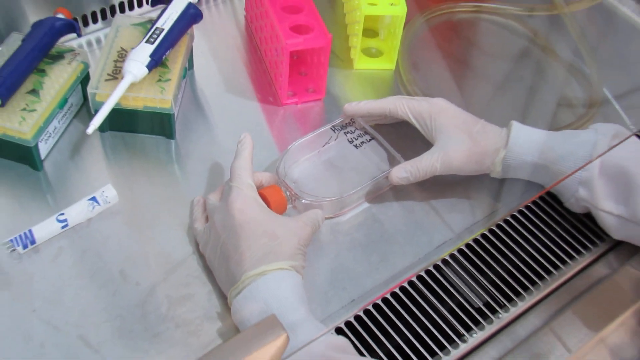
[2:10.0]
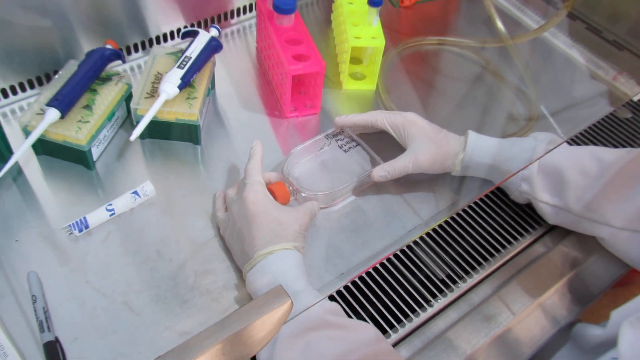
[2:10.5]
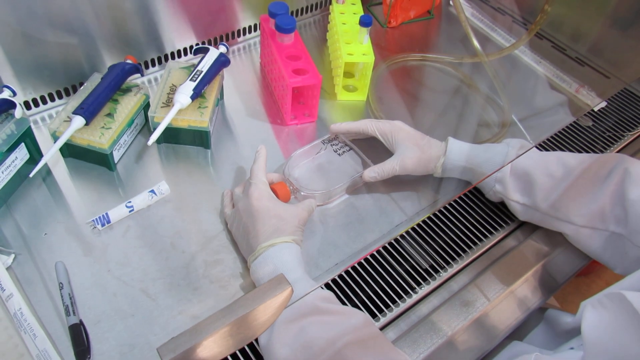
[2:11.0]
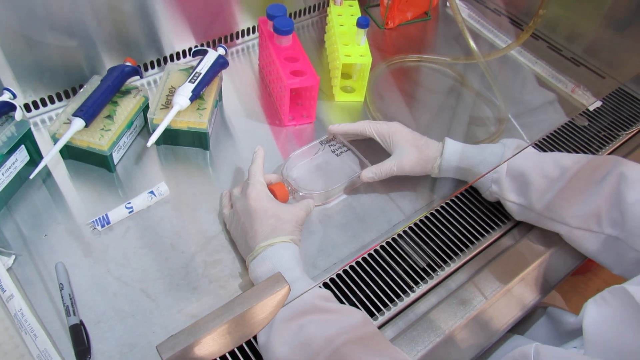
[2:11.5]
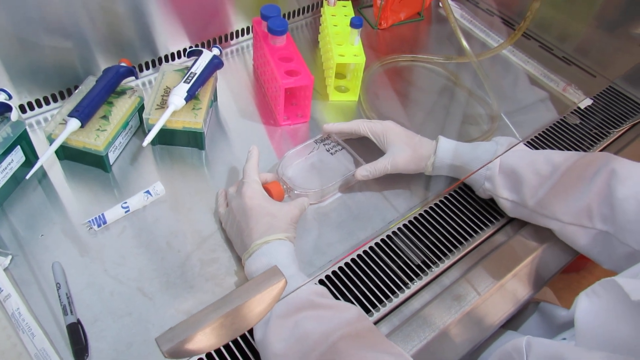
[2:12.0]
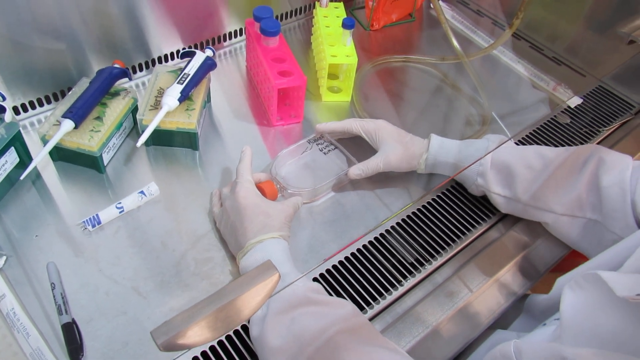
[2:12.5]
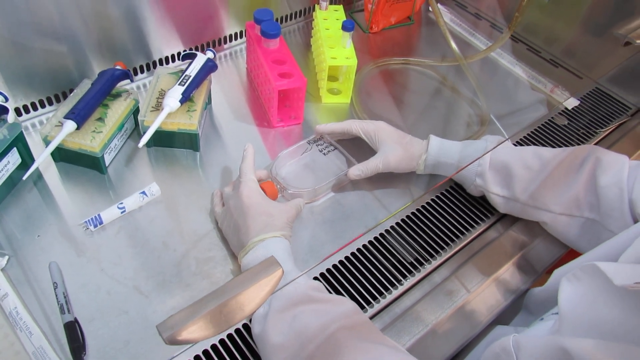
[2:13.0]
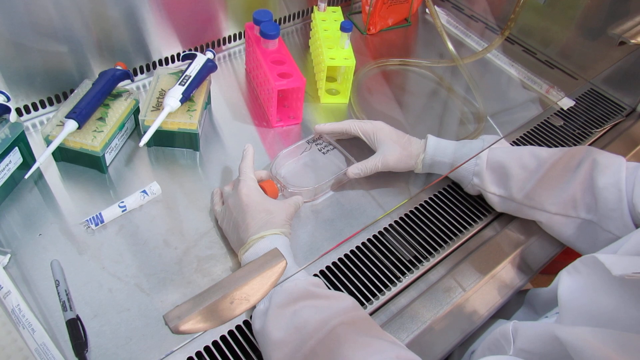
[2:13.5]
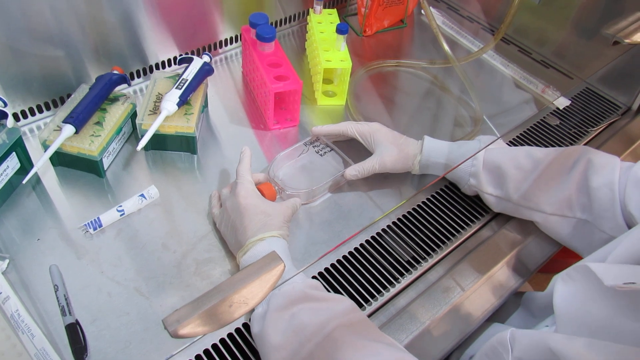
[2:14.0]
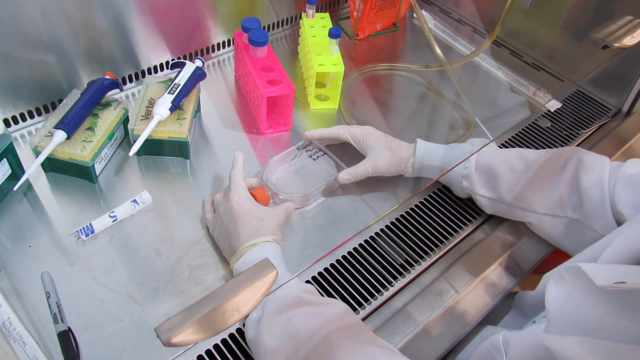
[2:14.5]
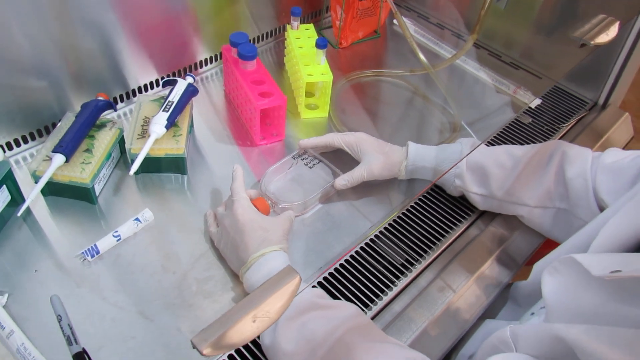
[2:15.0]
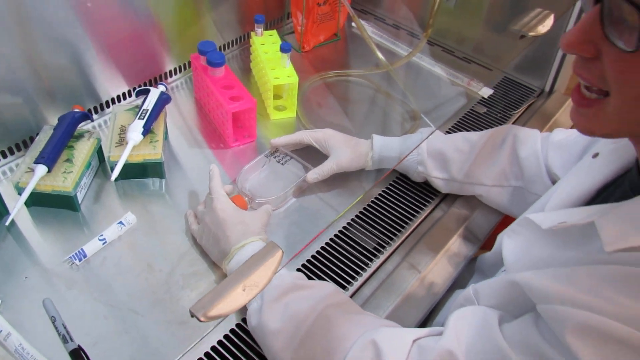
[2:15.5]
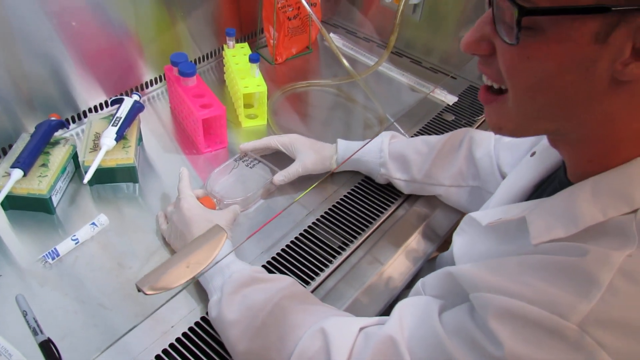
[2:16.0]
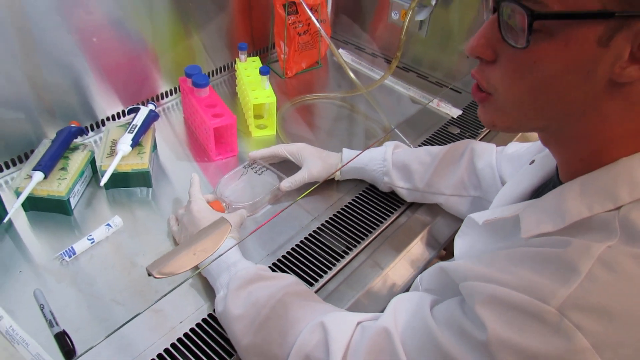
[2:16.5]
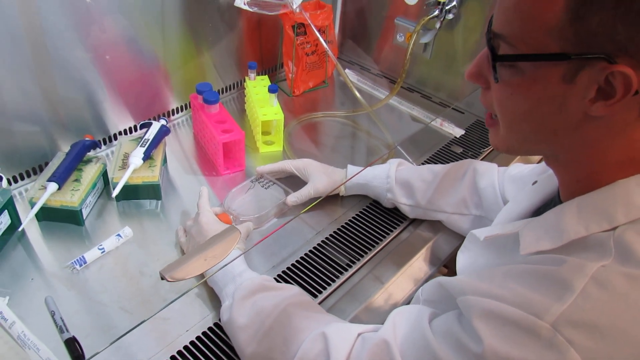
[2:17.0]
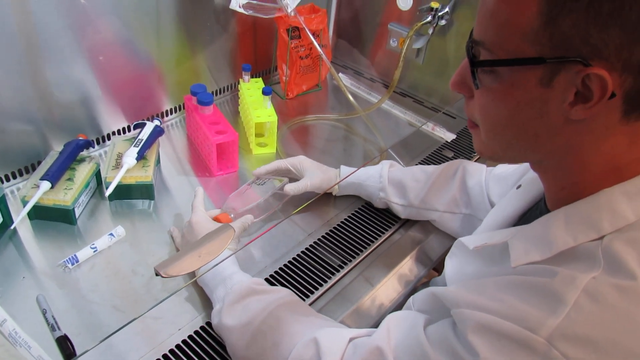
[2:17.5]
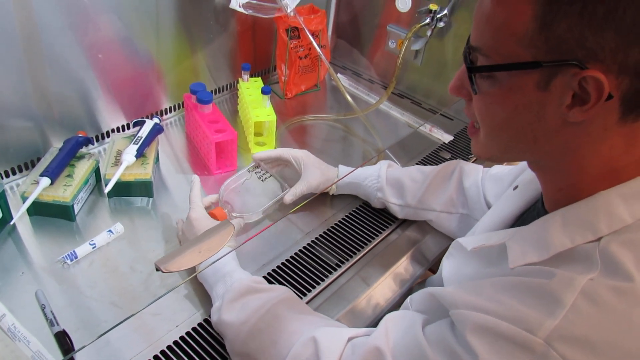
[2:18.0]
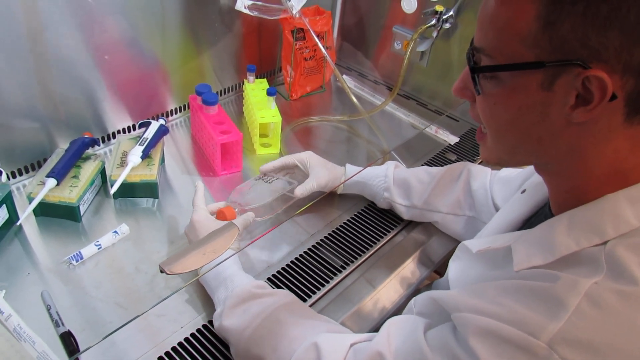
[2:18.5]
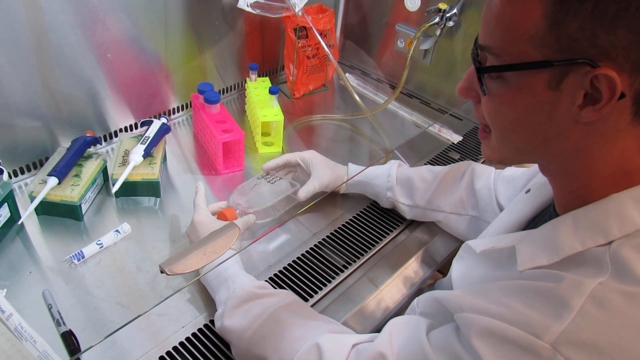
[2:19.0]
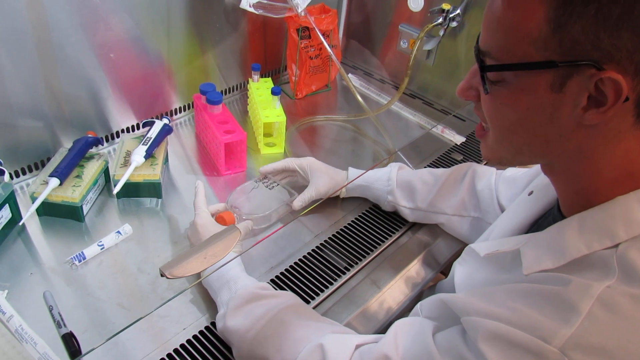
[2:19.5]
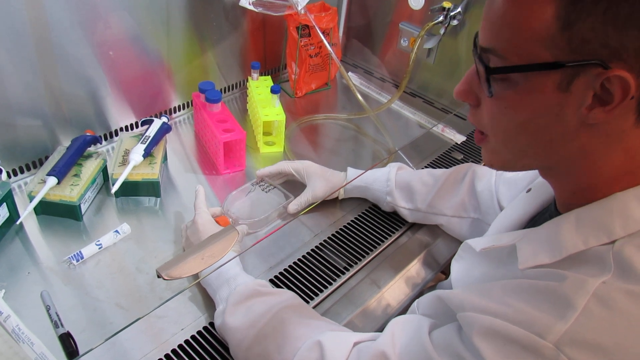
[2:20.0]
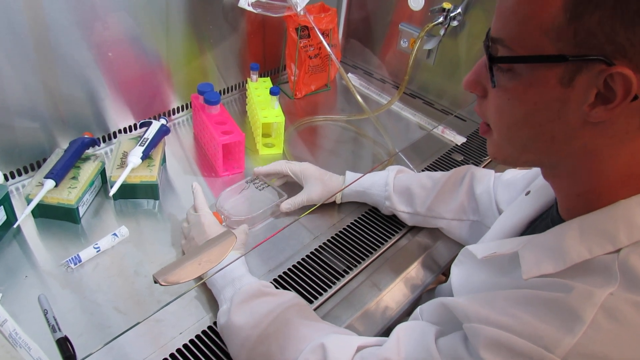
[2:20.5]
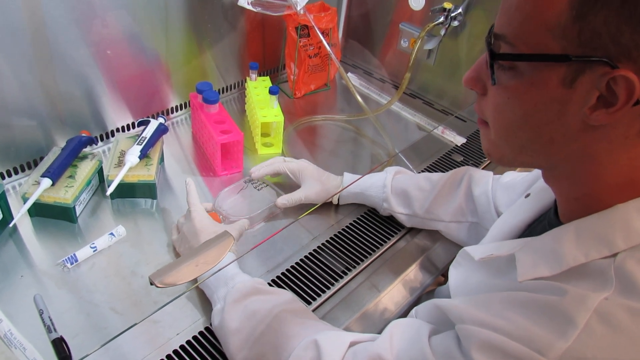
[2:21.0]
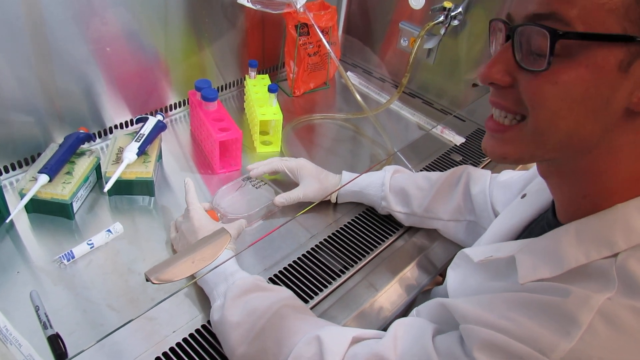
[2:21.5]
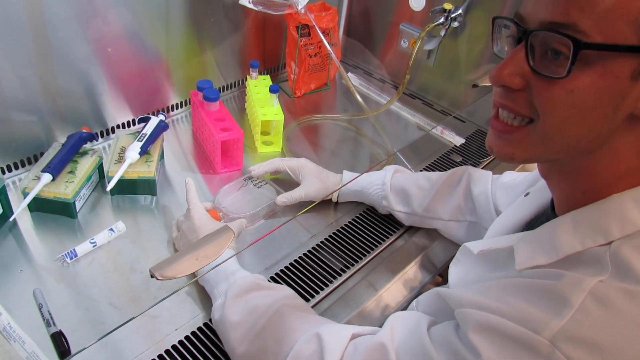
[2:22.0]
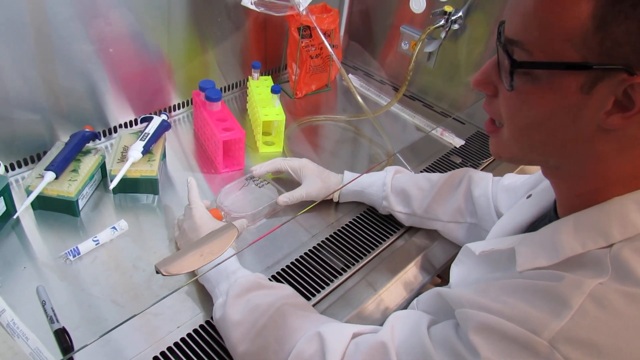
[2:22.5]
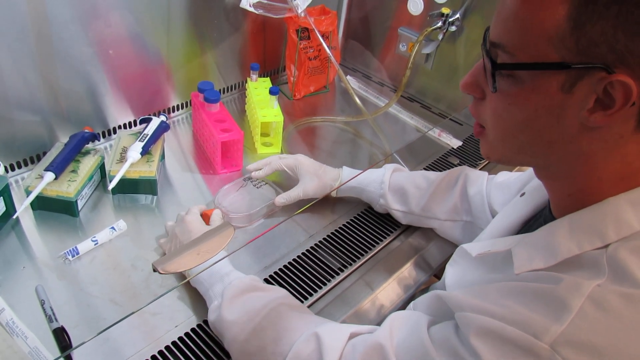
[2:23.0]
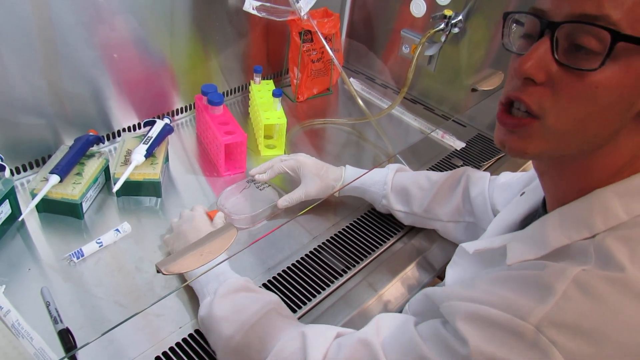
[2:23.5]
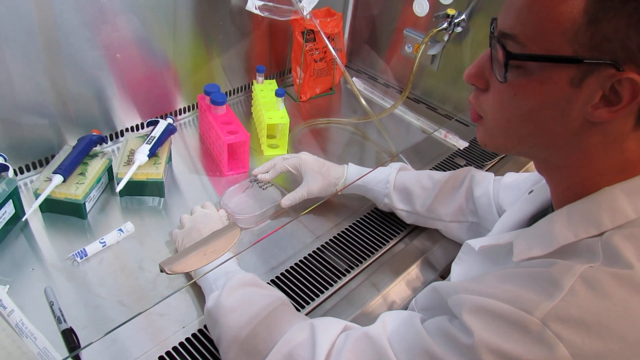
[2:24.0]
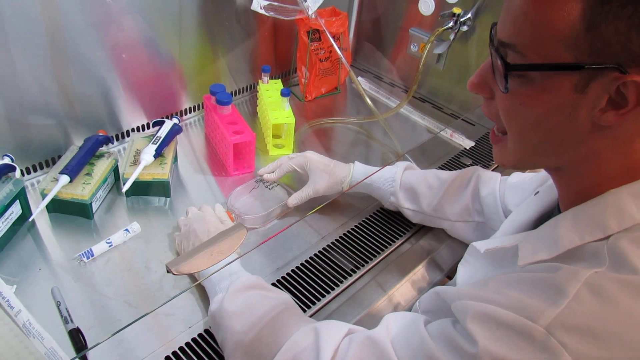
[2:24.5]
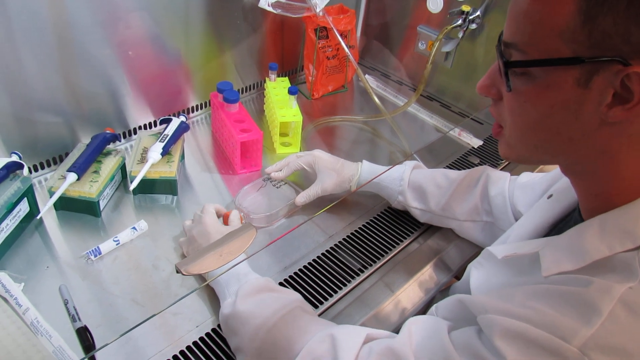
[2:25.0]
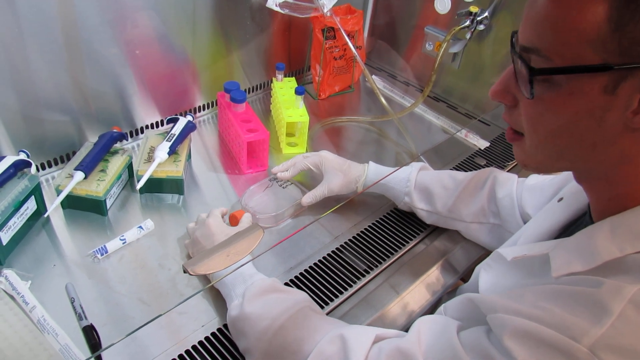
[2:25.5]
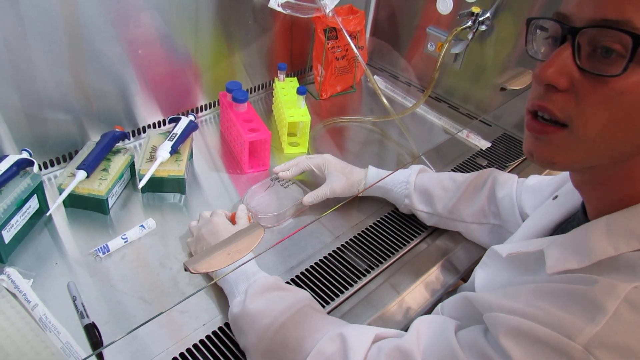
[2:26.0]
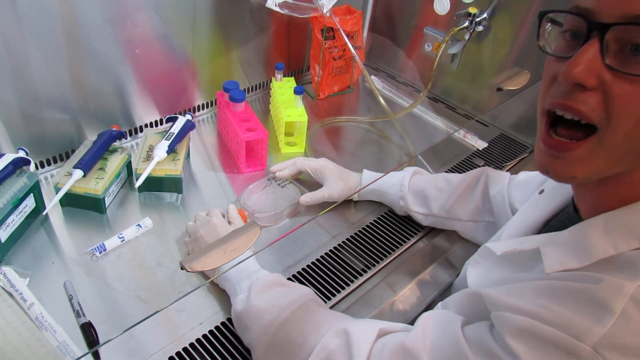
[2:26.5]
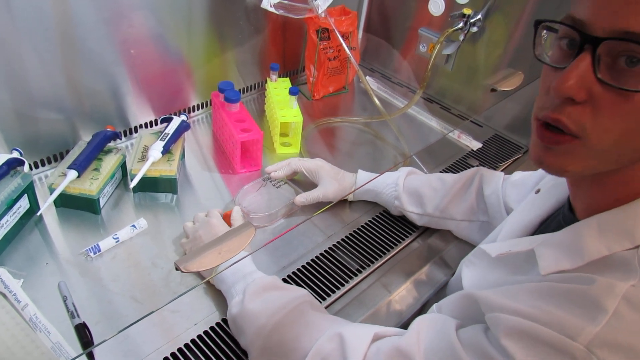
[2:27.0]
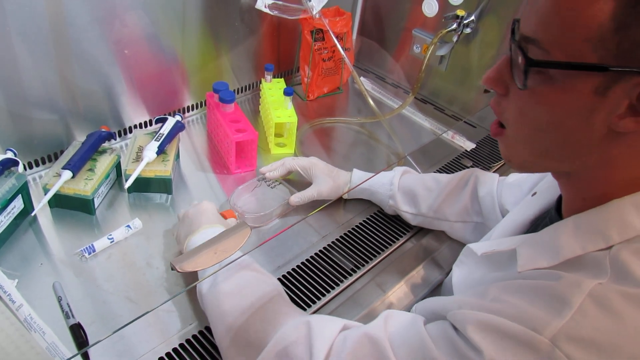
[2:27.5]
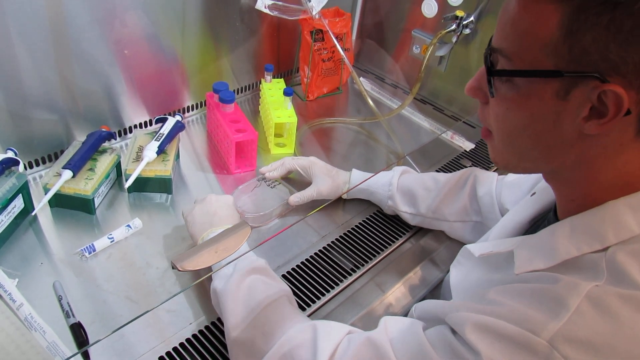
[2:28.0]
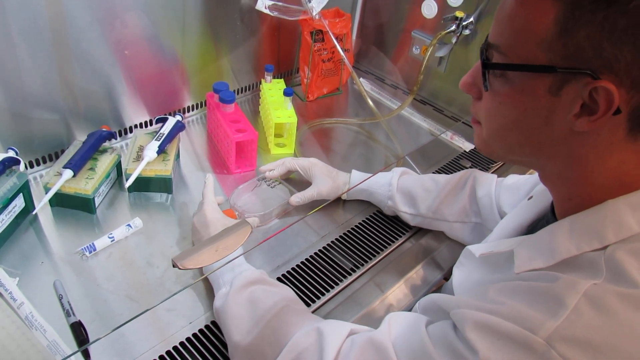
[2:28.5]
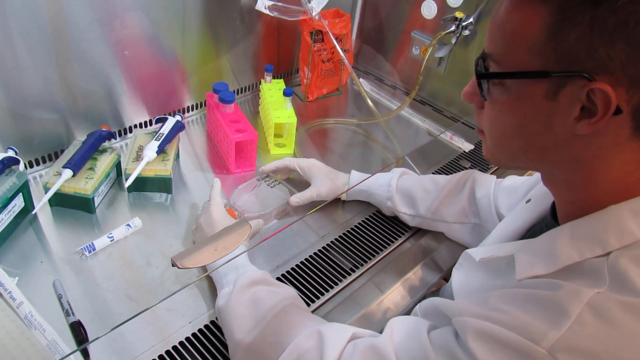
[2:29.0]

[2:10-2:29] White medical gloves and the sleeve of the lab jacket are visible as the hands hold the clear bottle with the orange label. The writing on it is face up, on the right-hand side of the bottle. The view pulls back to show a man with short brown hair. He is talking, seen in left side profile, then turns slightly toward the left, smiling and showing both rows of teeth, before talking again. He holds the bottle the whole time without really moving it or pointing at anything.